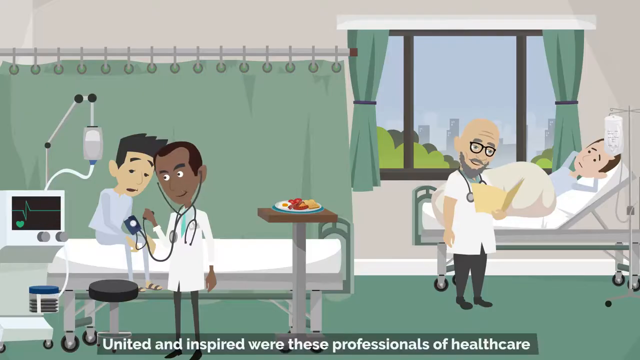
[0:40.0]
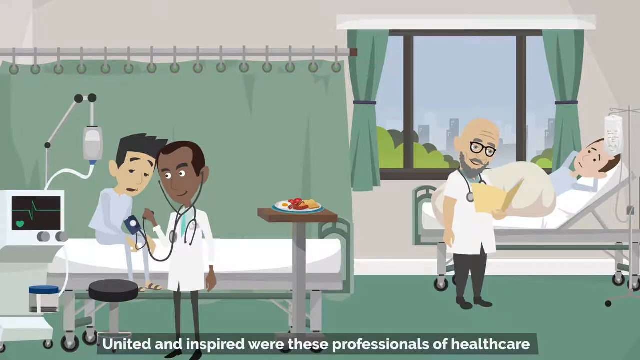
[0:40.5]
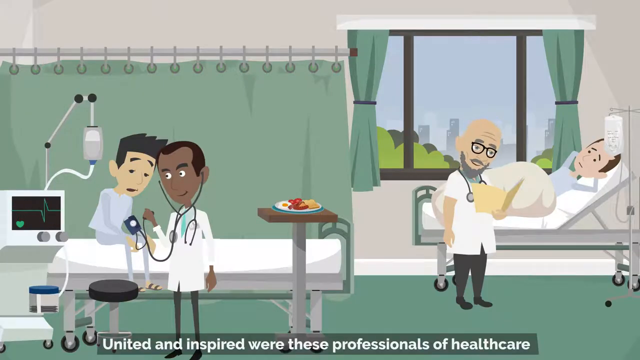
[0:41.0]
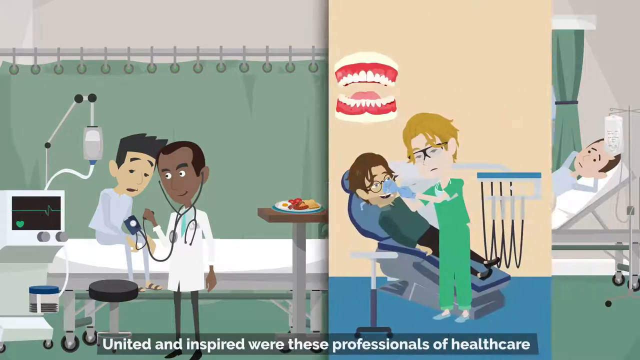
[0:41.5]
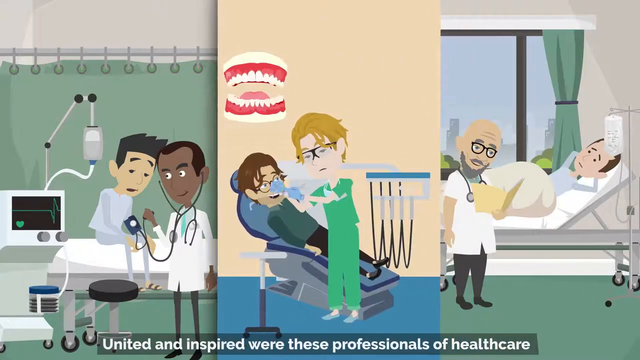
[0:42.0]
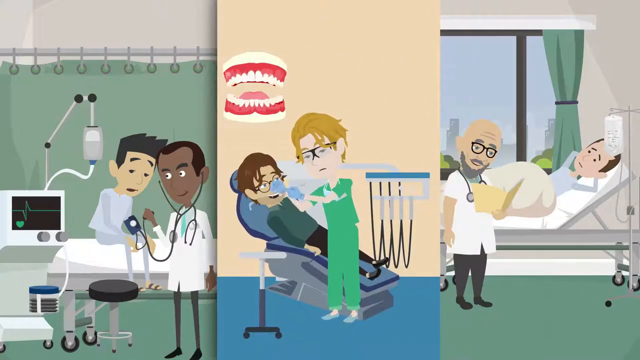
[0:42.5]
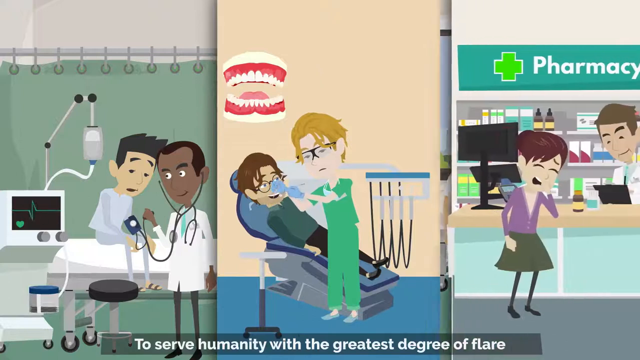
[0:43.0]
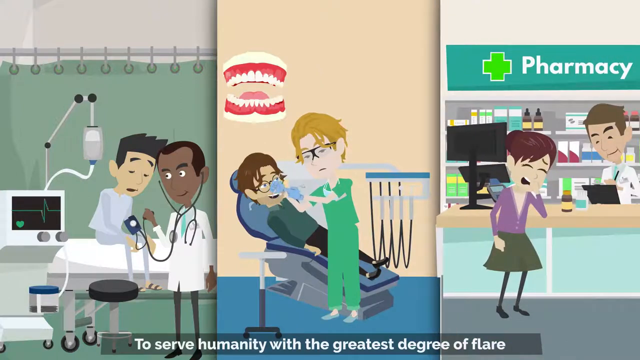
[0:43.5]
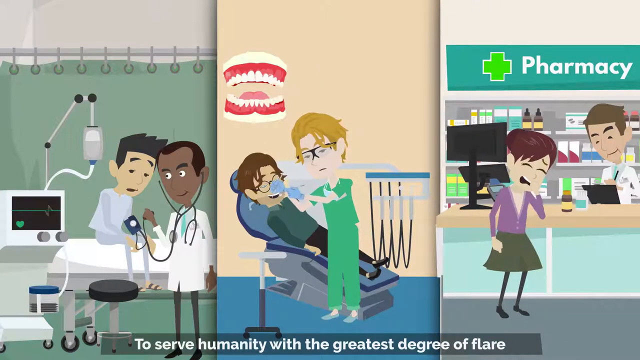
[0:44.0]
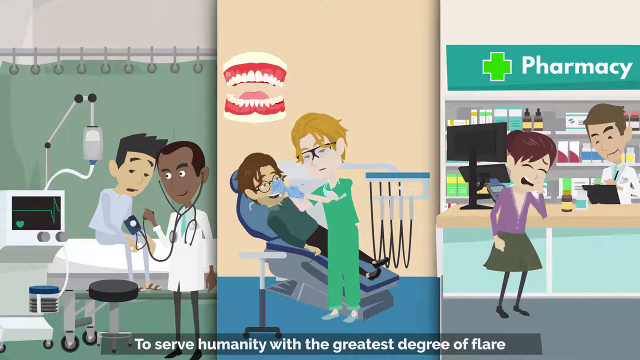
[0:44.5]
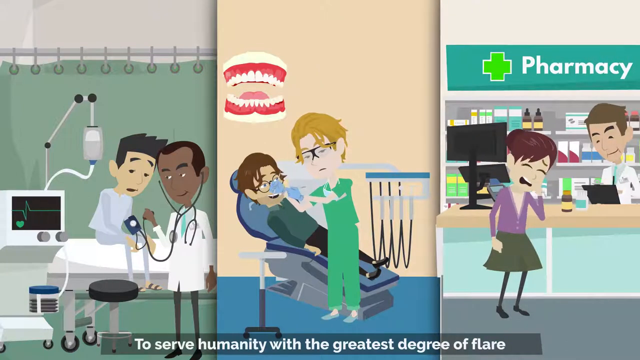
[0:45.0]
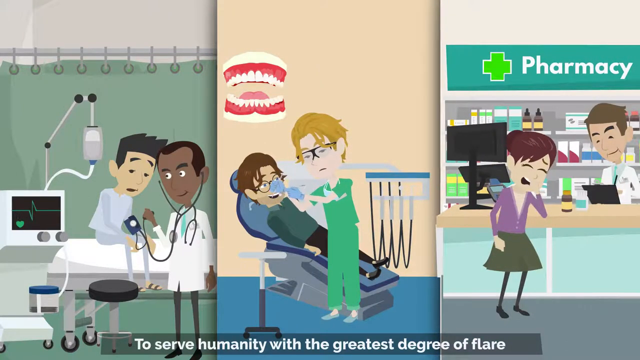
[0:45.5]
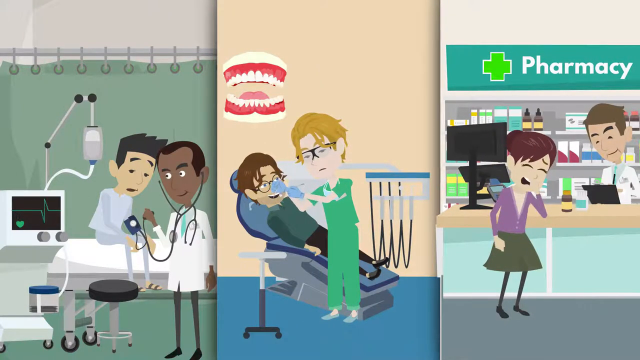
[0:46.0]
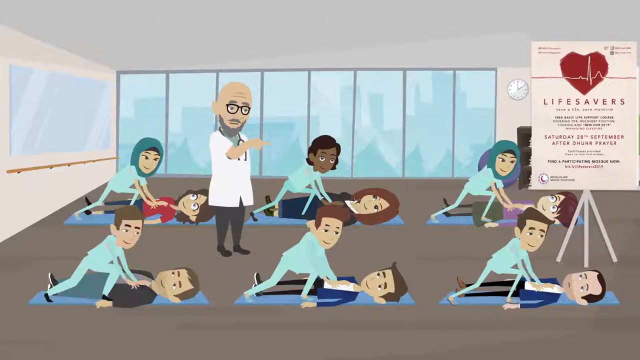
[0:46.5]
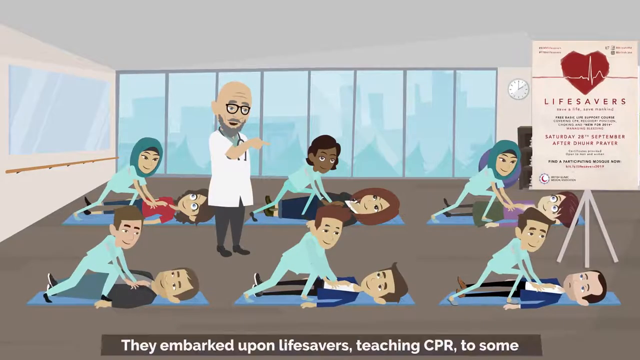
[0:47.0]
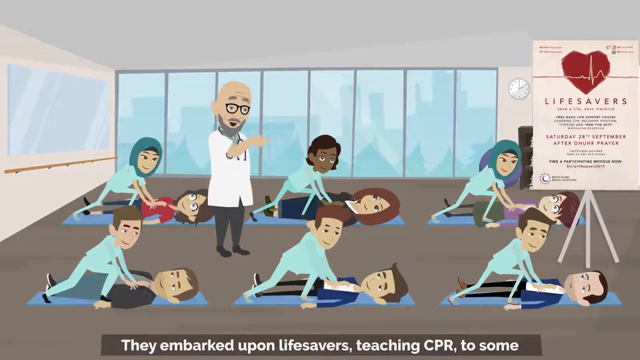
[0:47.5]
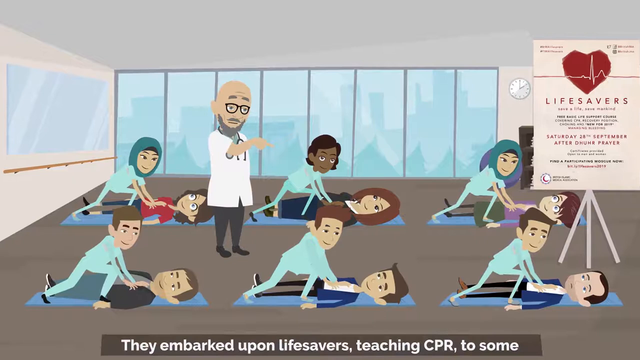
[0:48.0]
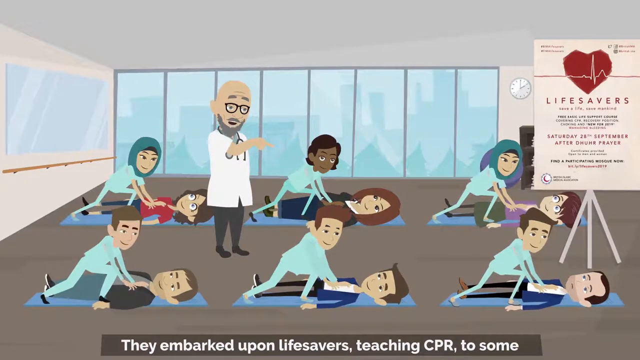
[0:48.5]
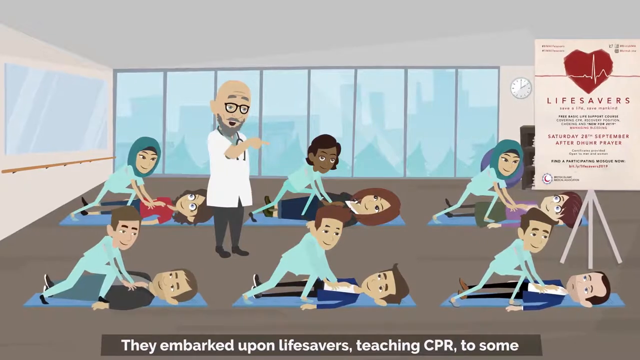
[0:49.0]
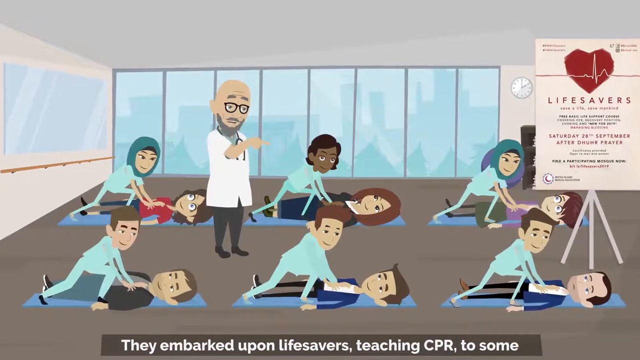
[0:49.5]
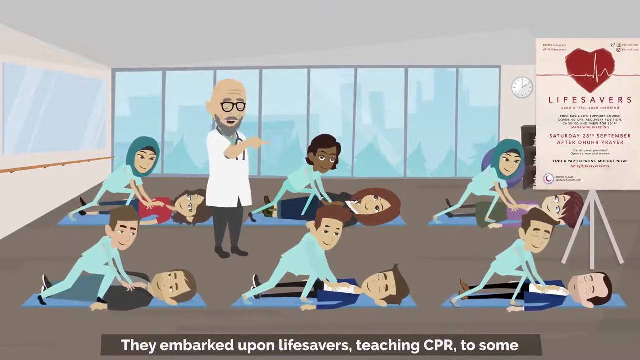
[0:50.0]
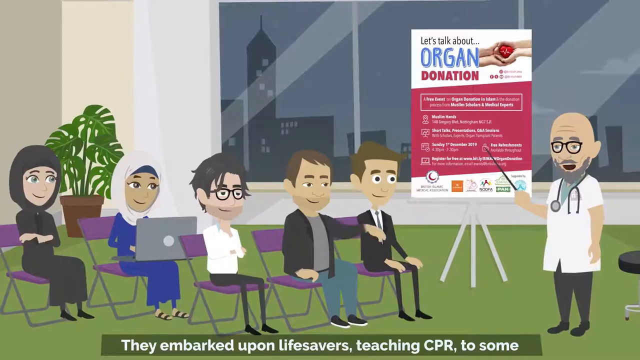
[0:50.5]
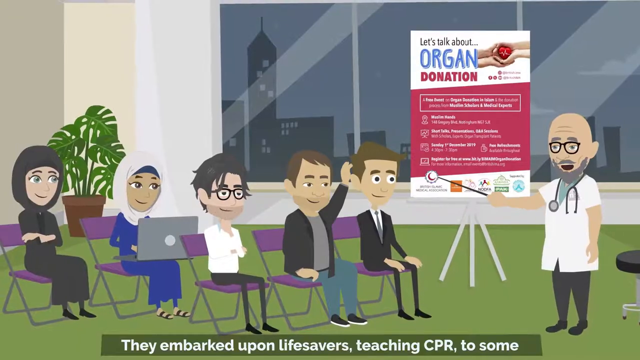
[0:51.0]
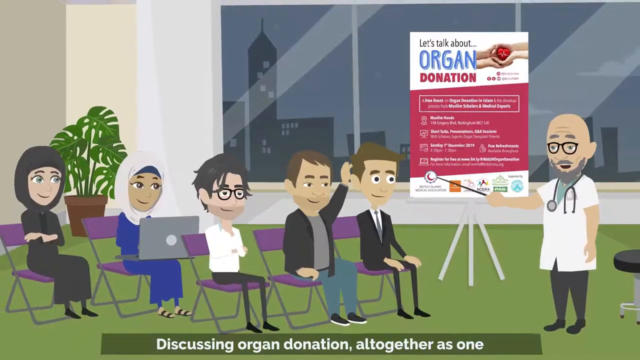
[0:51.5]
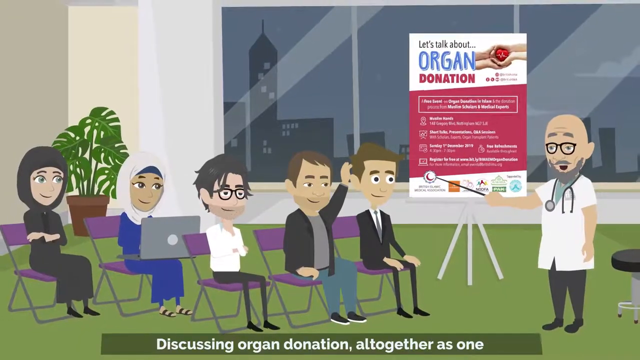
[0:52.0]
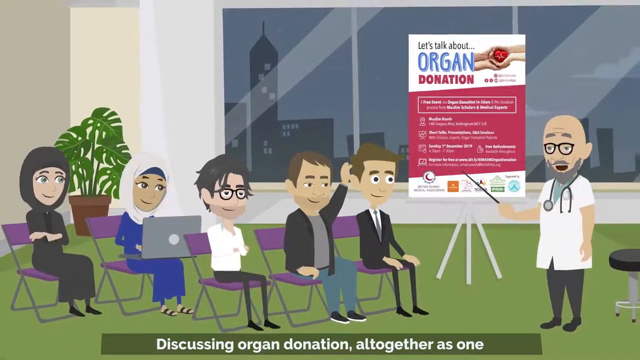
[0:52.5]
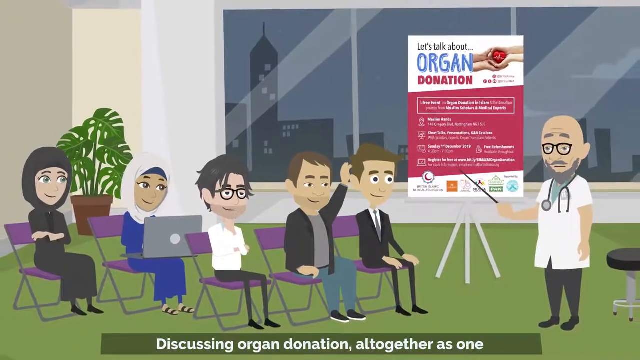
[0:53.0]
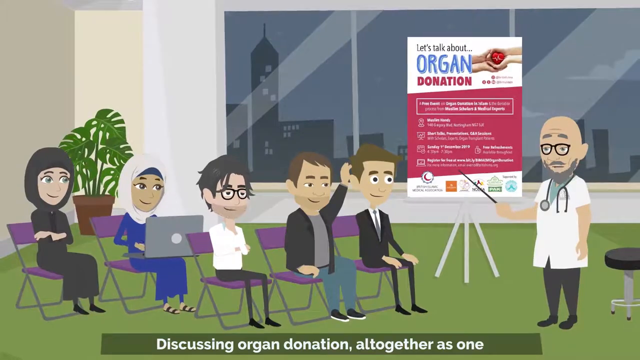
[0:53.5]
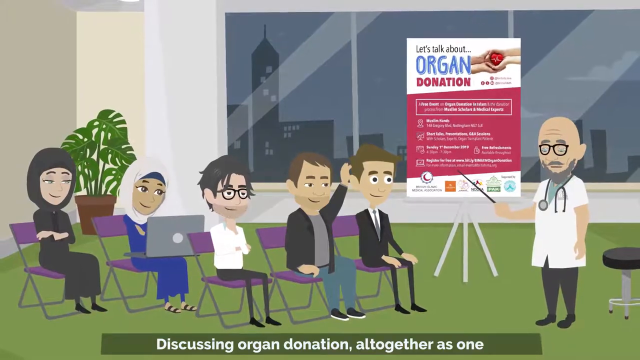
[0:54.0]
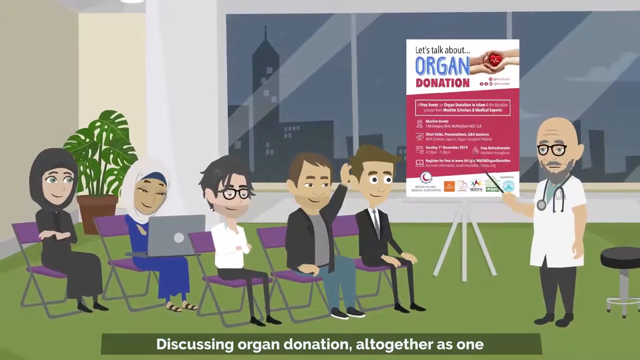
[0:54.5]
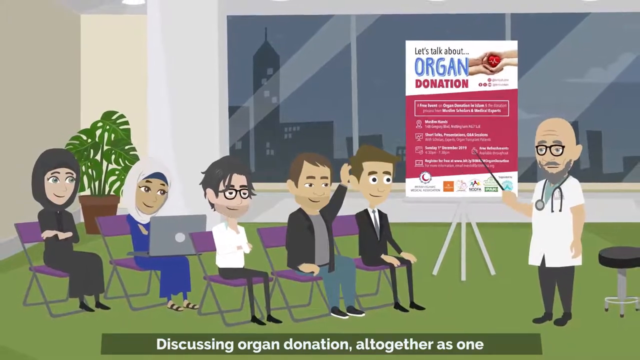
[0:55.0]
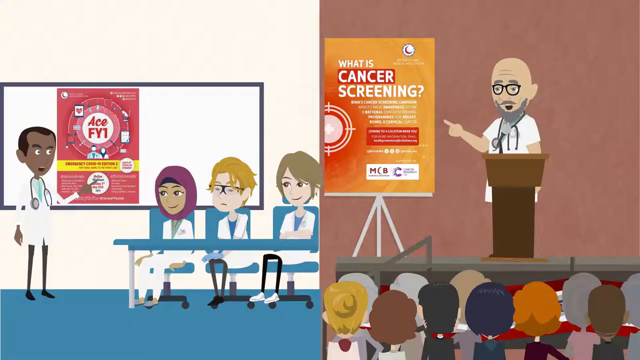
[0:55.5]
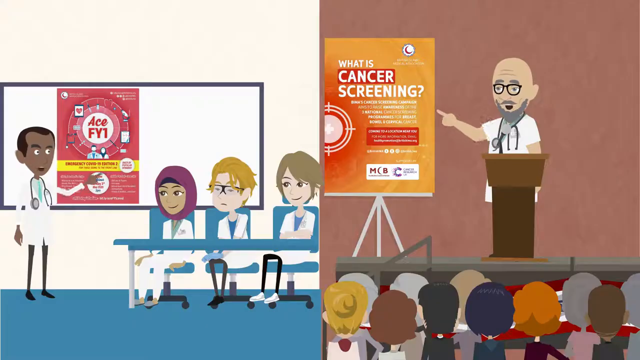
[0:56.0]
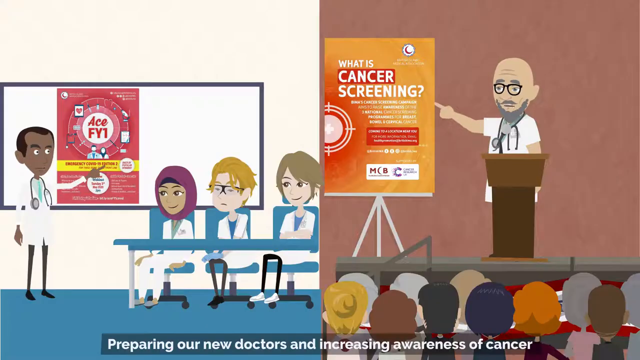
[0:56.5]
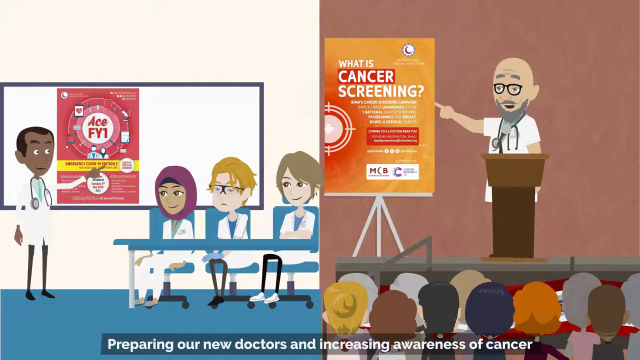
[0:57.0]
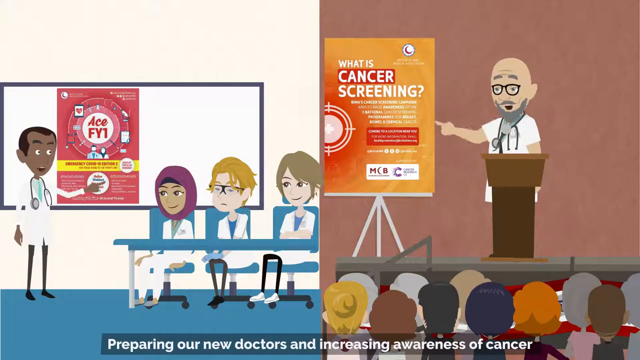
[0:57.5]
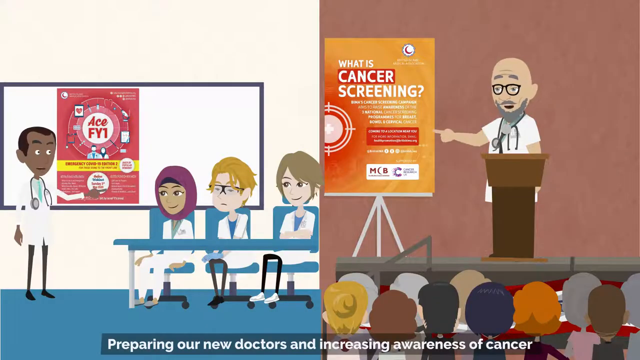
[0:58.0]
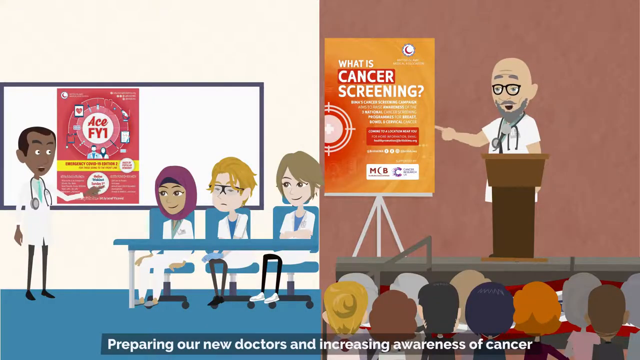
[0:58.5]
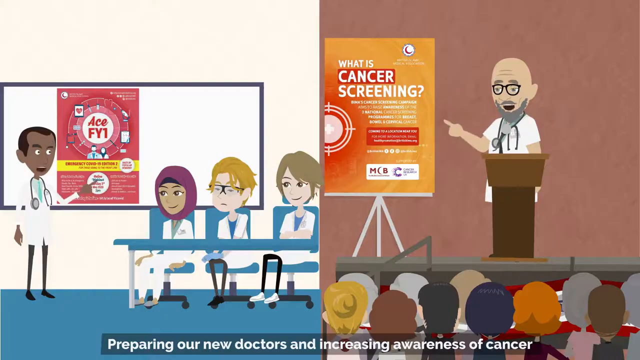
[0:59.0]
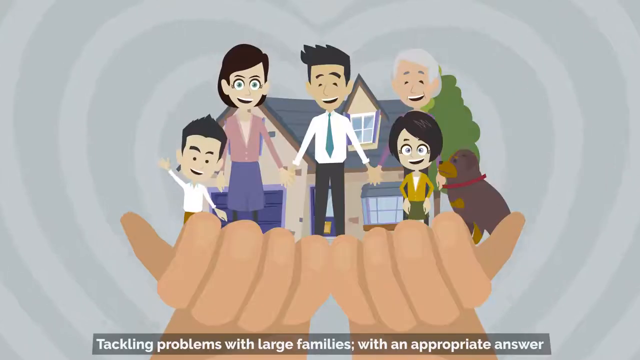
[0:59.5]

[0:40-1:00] In a hospital room with two beds, one bed is in the lower left of the image, where an African American doctor is taking the blood pressure of a Caucasian man in slate pajamas and sandals sitting on the edge of the bed. An IV pole is to the left, and a meal that has been delivered to the patient is on a pedestal to the patient's left. Further back in the room is another hospital bed. The bearded physician reads the patient's chart, holding it in his left hand as he stands to the left of the patient from the viewer's perspective. The patient, a Caucasian male, looks concerned and has his hands clasped behind his head. A window behind them shows a city skyline with a light blue sky and green trees arranged next to it. A large green curtain extends horizontally through the image from the far left to the right center behind the first patient.